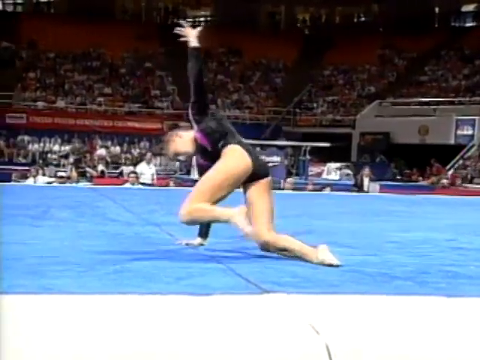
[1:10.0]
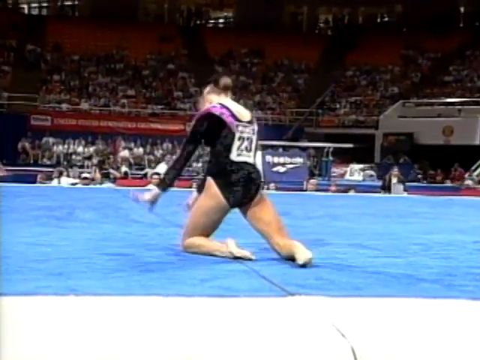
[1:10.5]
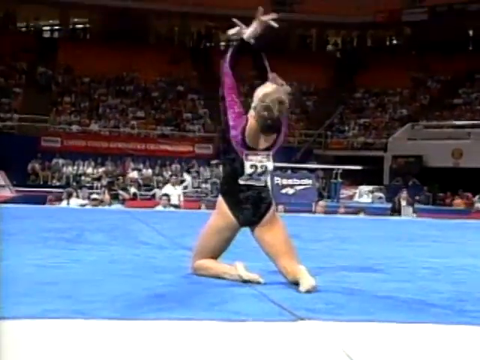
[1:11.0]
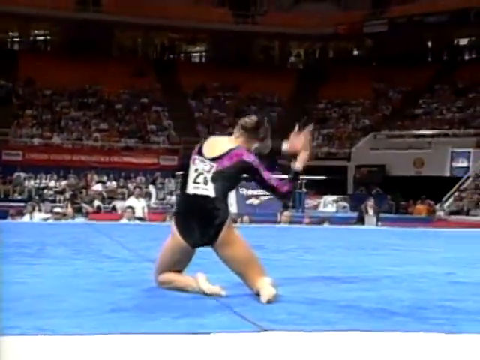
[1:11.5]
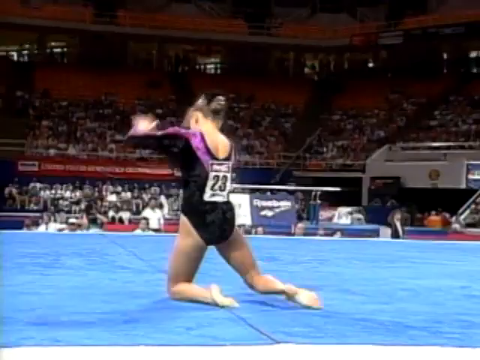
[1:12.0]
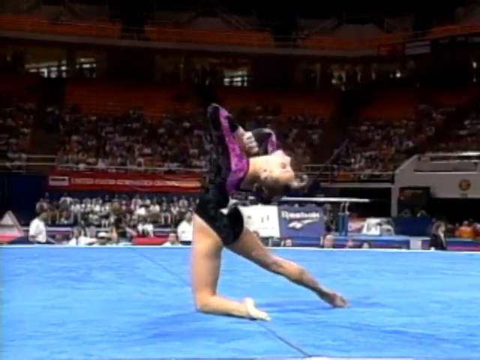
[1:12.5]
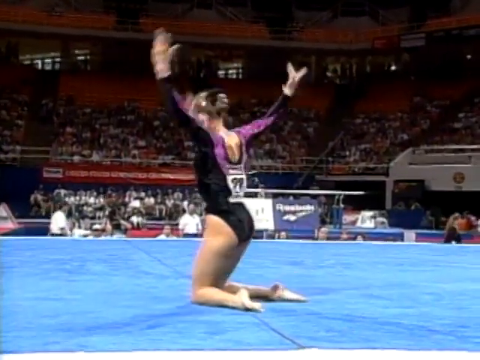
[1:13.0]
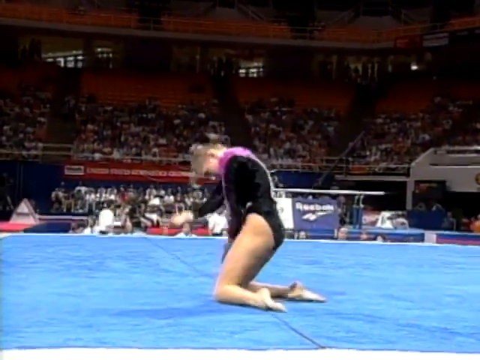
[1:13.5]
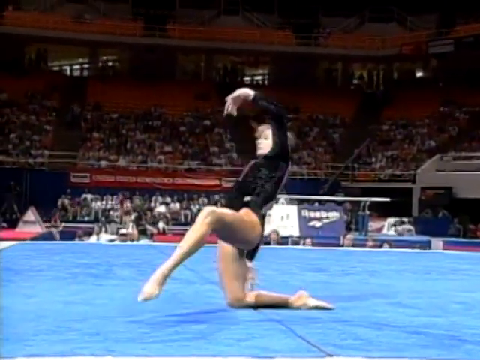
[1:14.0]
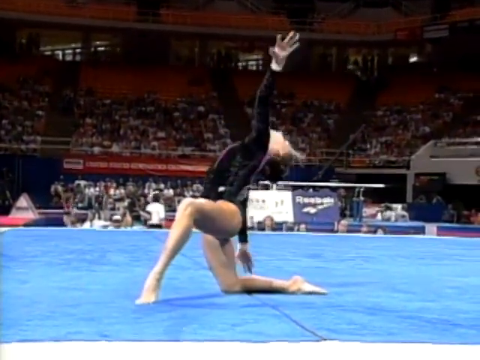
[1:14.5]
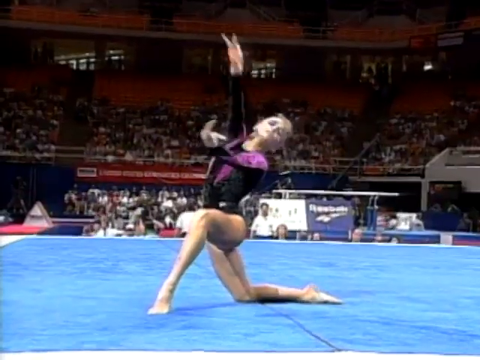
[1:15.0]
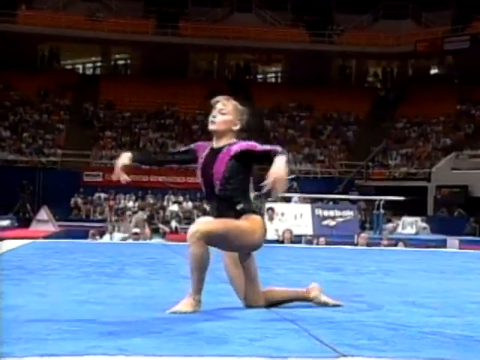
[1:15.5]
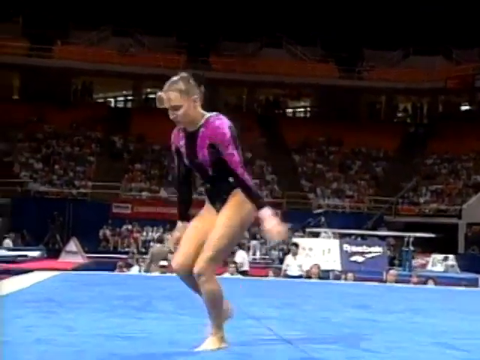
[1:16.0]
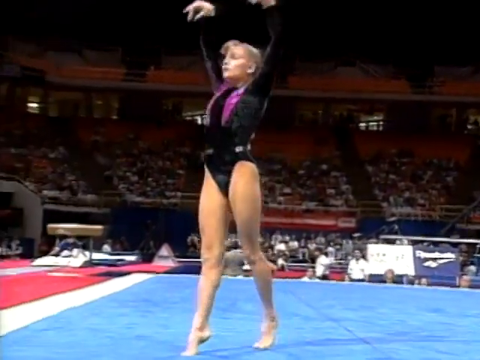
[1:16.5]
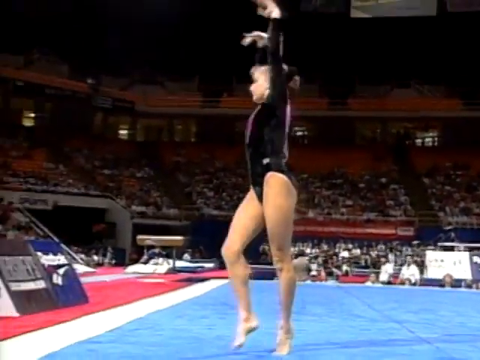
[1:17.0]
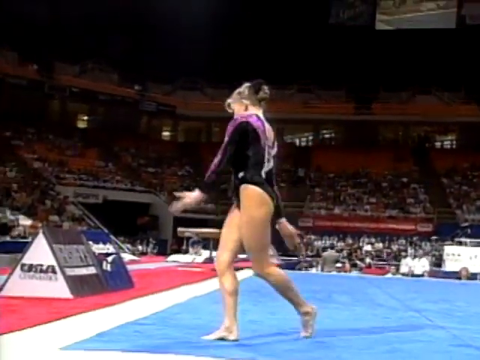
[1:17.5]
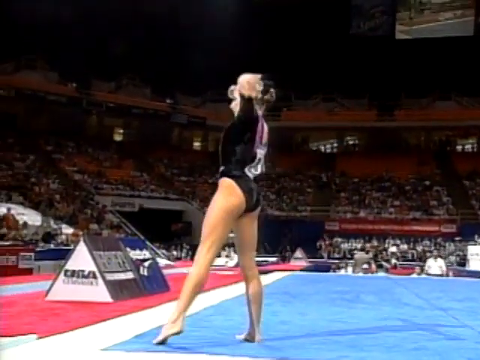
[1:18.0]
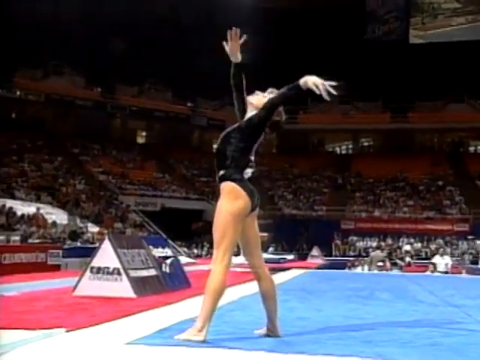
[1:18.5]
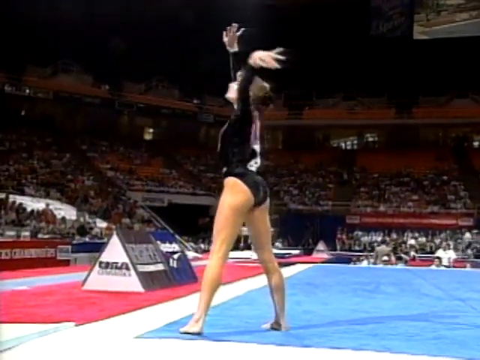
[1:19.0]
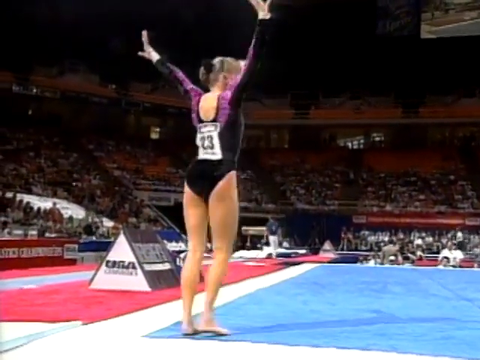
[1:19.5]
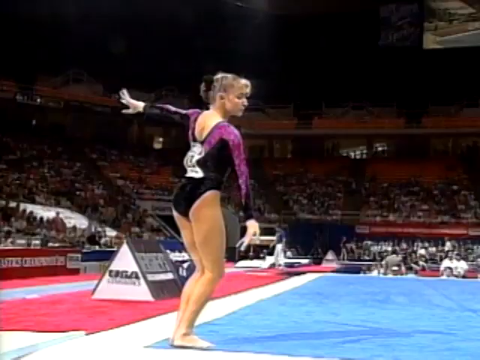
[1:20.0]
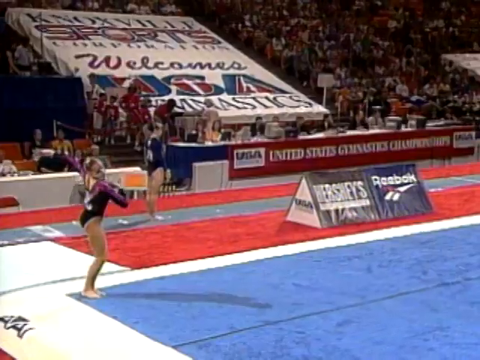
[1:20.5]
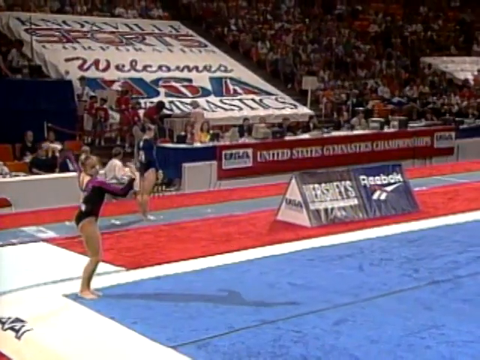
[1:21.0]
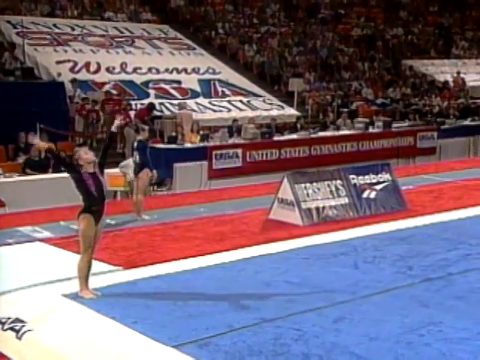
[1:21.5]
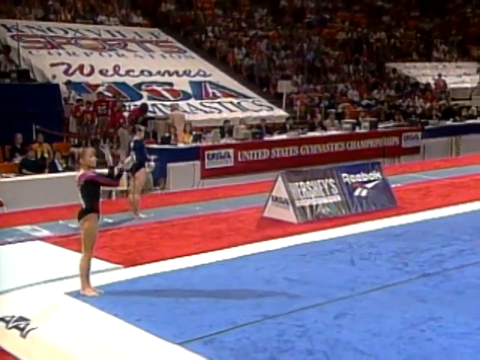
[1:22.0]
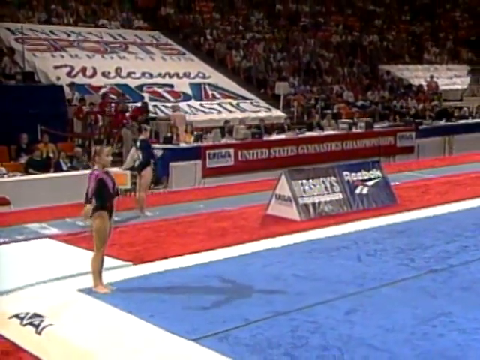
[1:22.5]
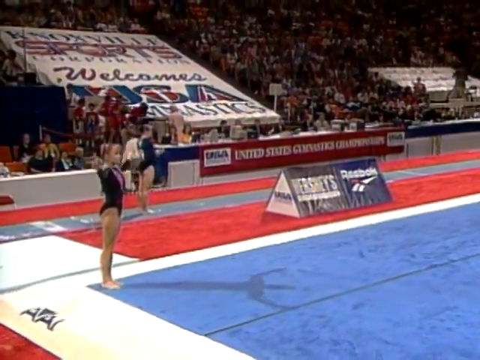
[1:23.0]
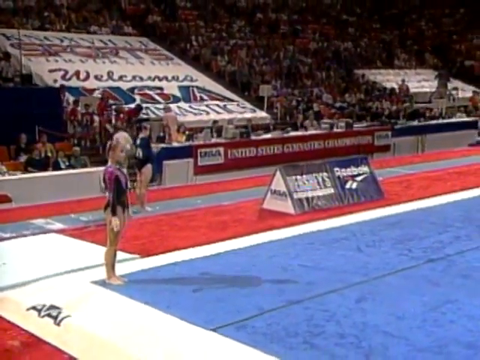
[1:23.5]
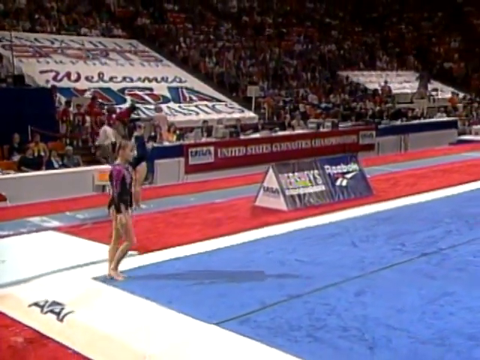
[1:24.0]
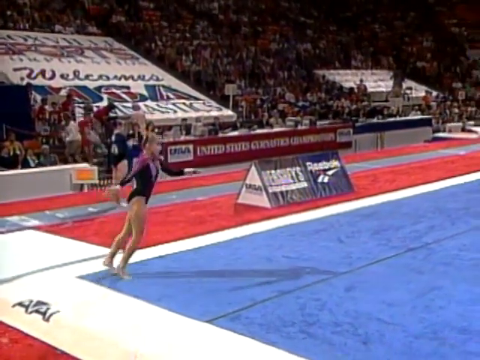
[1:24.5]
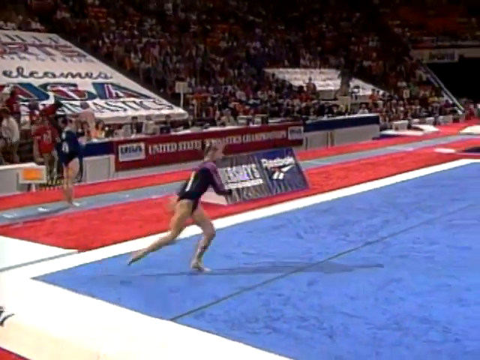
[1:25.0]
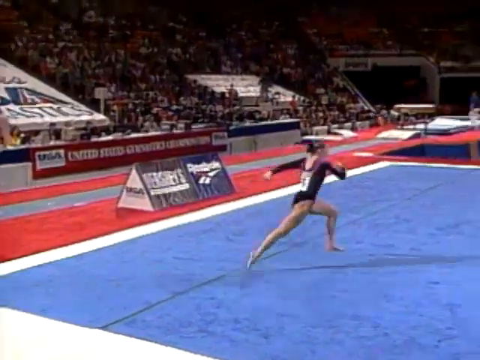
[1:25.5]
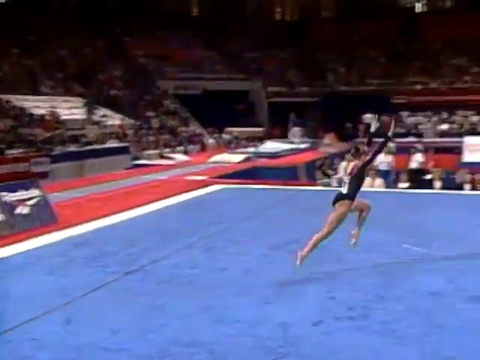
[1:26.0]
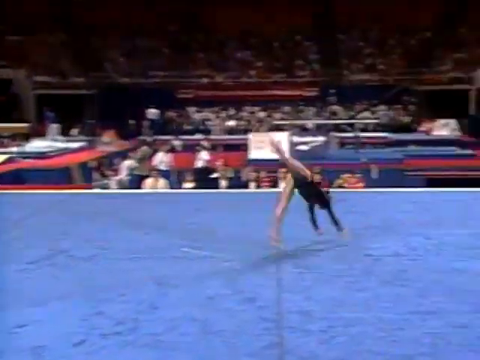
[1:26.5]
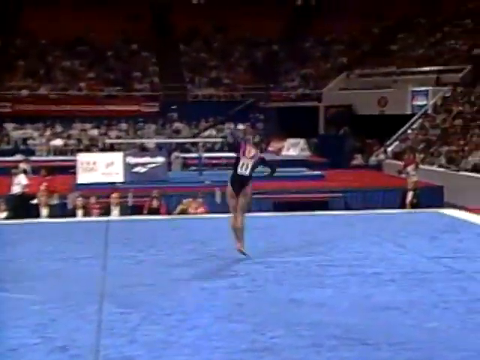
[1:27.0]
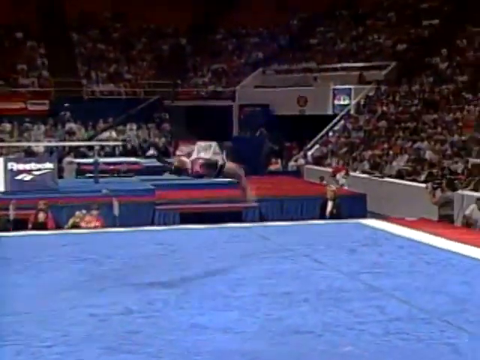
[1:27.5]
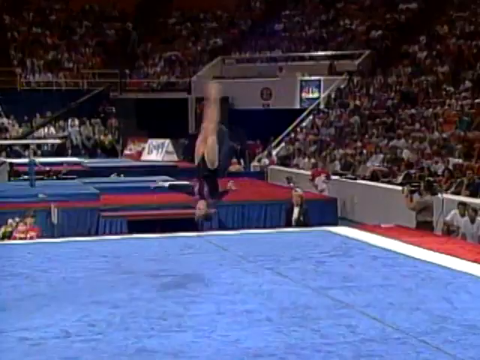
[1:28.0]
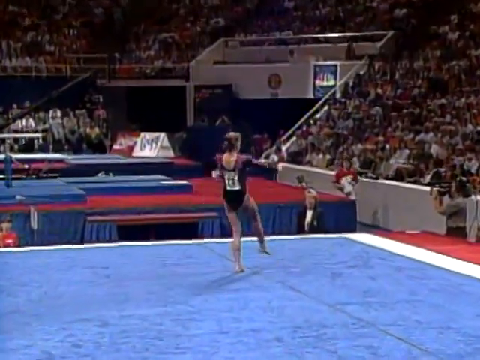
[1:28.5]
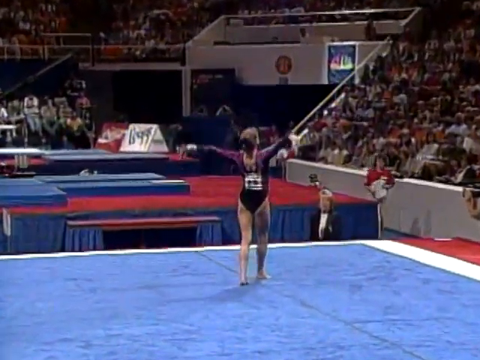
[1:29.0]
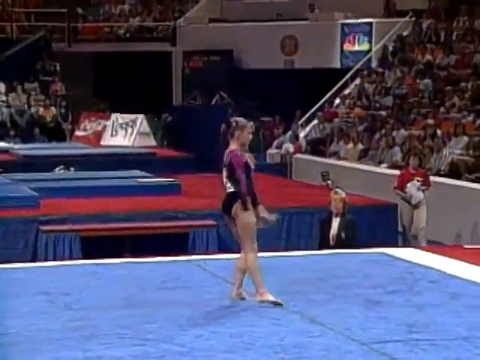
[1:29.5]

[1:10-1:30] A gymnast in a black leotard with a little purple on it is on a blue mat, apparently performing a routine in front of a large crowd; not many seats in the stands behind her are empty. She is on her knees on the mat doing her routine, and the number 23 is on her back. She strikes different poses, gets to the corner of the mat, puts her hands up in the air and poses as she stands in the corner, looking like she is preparing for another trick. She runs to build speed, does a couple of flips and a couple more, then dances and spins. The mat is big and blue with a thick white outline denoting out of bounds. Based on the quality of the footage, this could be an event from the mid to late 90s.